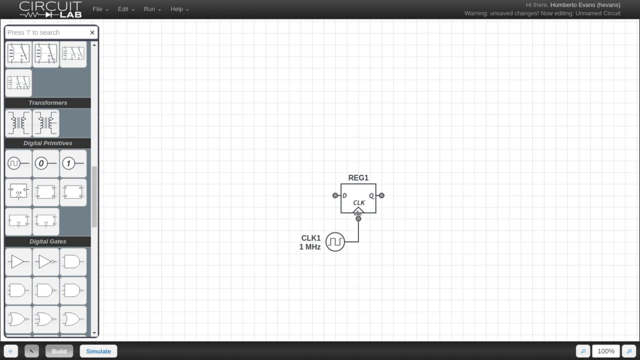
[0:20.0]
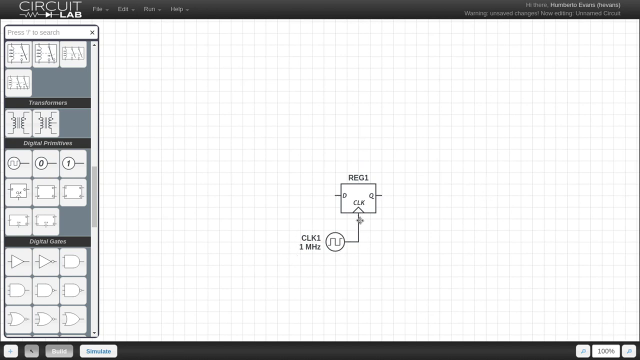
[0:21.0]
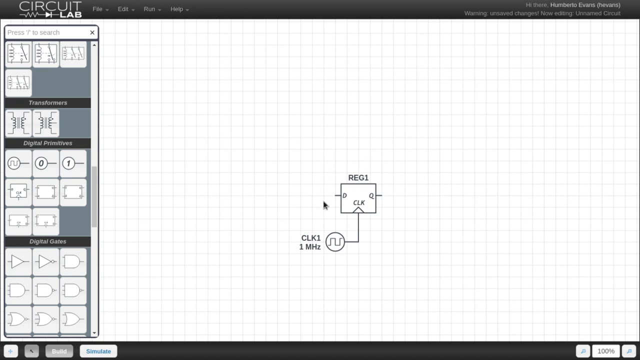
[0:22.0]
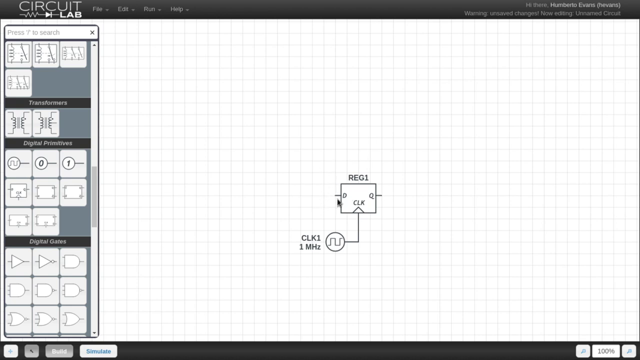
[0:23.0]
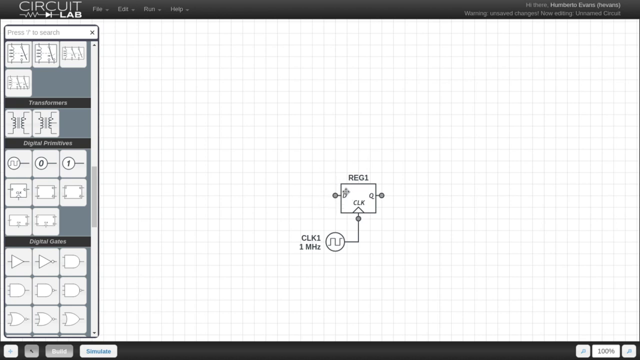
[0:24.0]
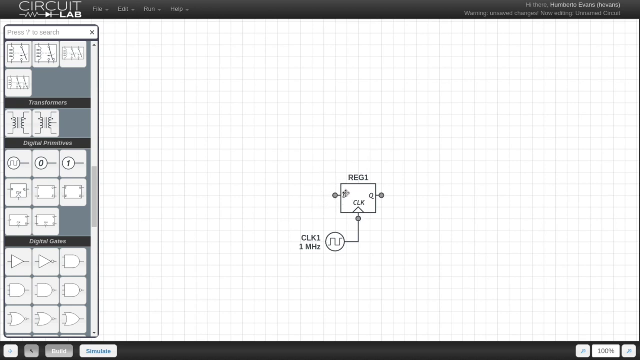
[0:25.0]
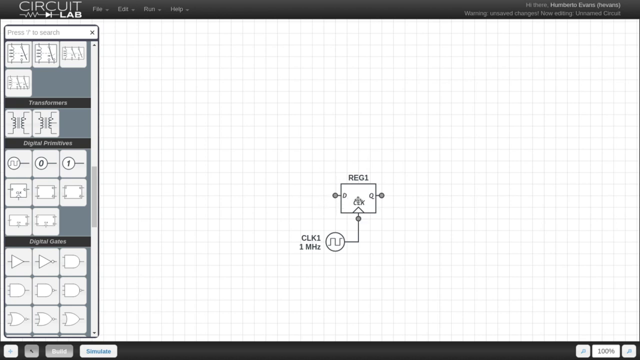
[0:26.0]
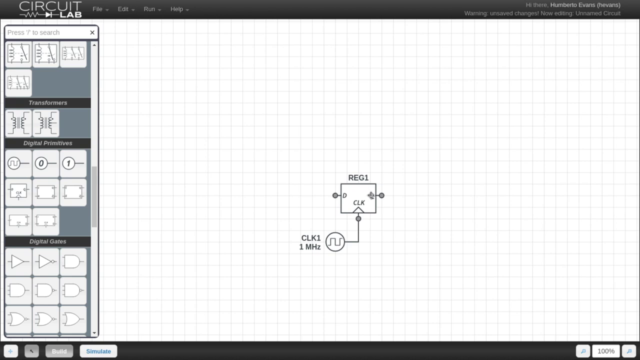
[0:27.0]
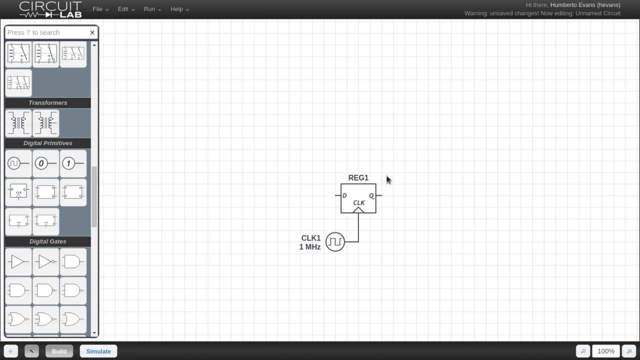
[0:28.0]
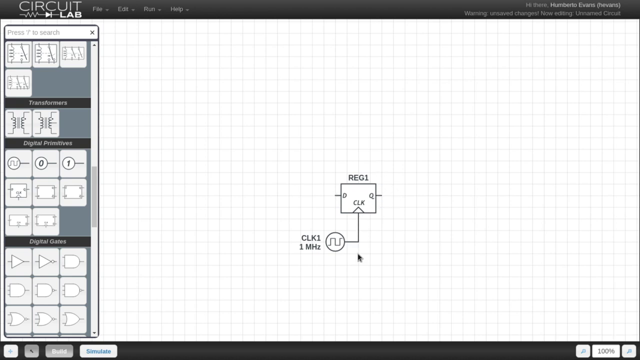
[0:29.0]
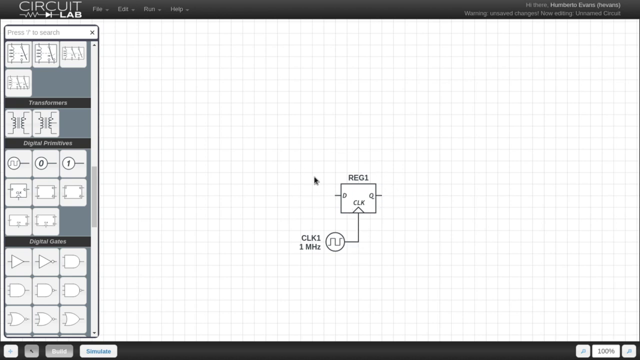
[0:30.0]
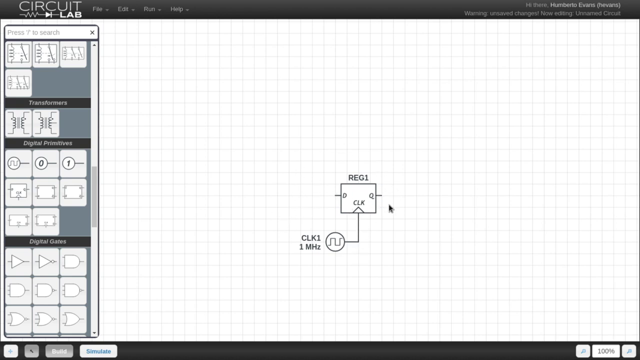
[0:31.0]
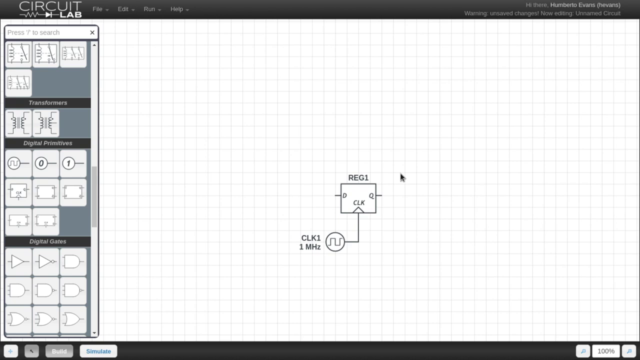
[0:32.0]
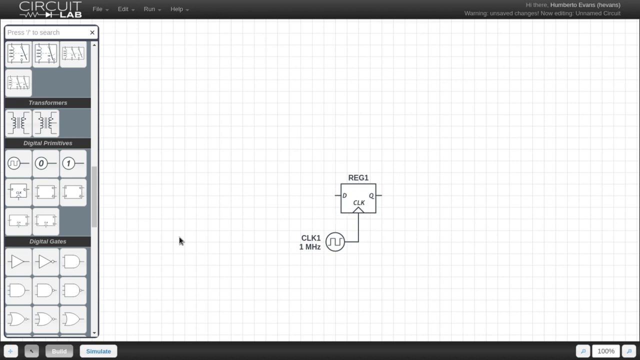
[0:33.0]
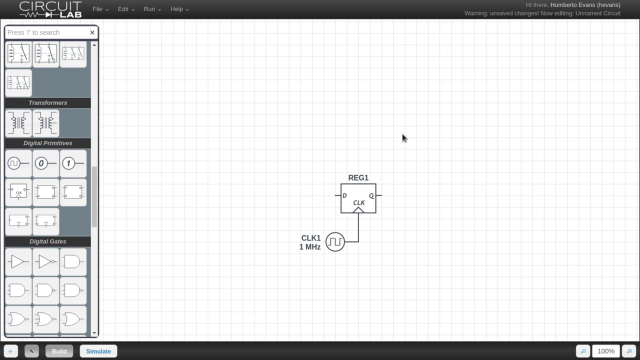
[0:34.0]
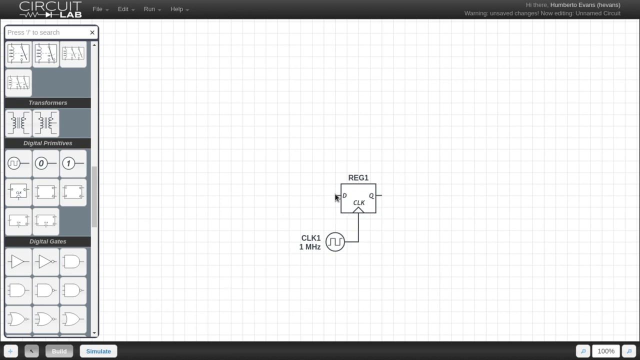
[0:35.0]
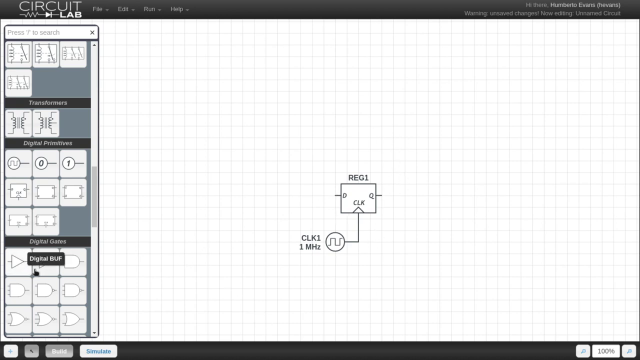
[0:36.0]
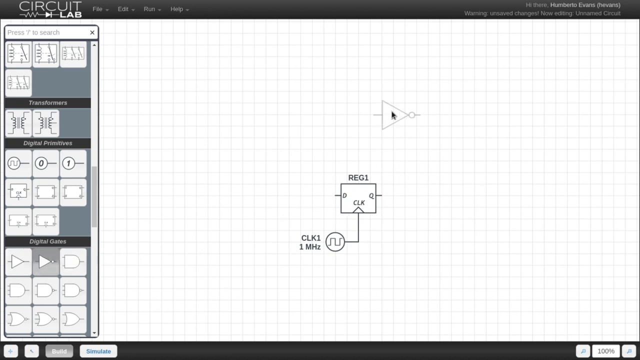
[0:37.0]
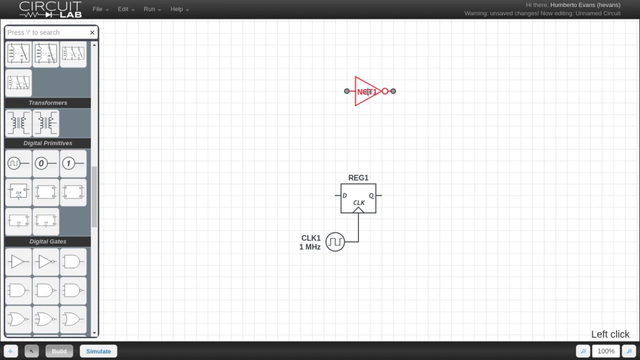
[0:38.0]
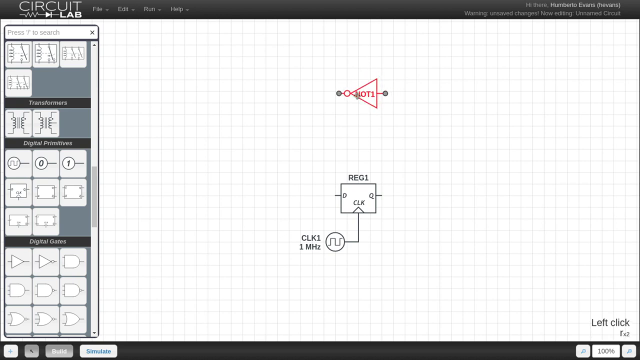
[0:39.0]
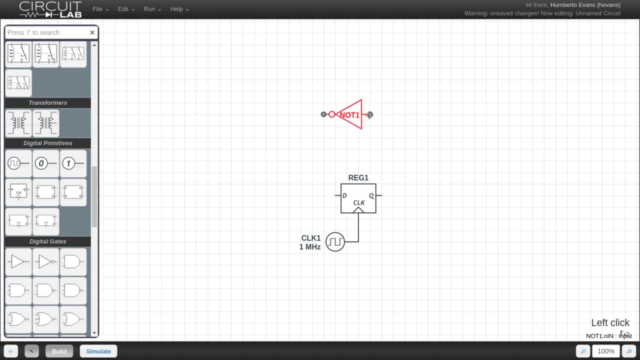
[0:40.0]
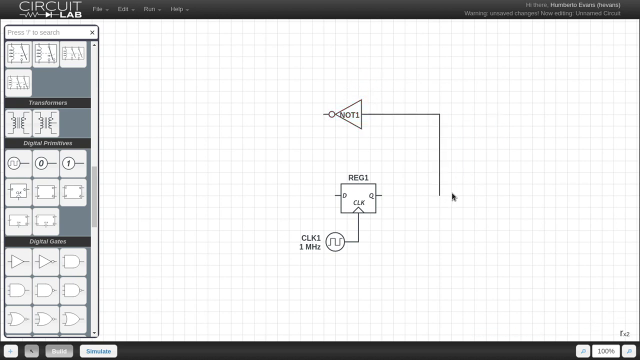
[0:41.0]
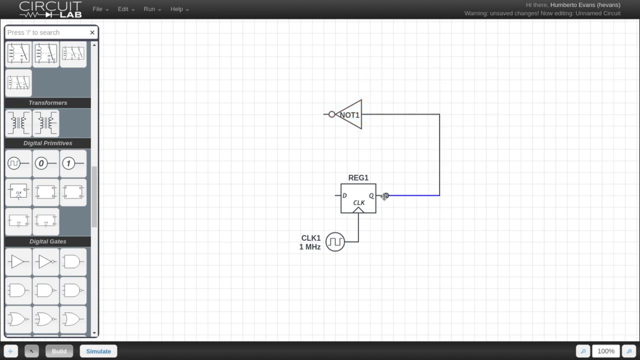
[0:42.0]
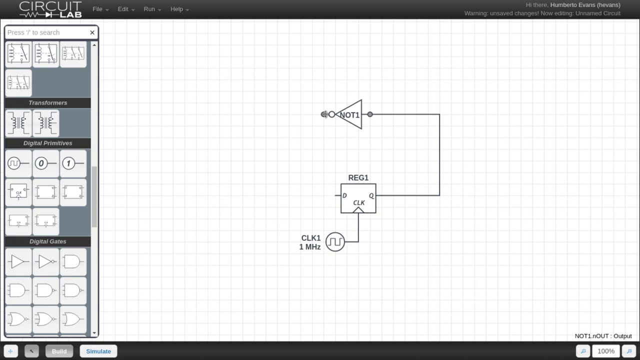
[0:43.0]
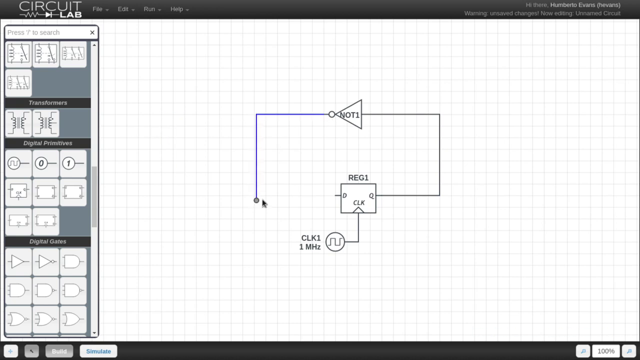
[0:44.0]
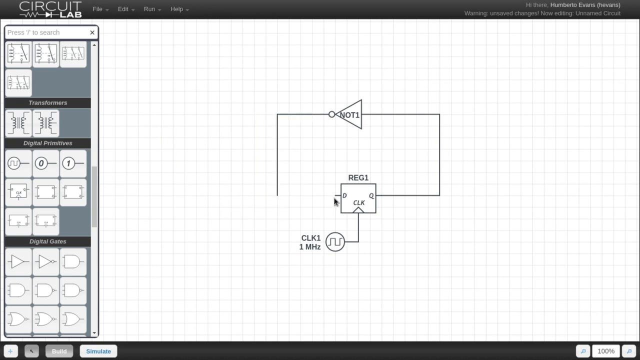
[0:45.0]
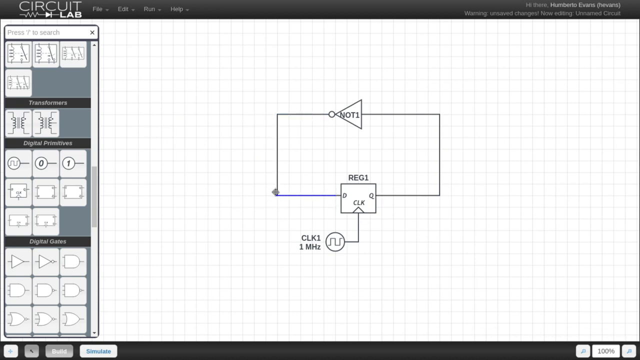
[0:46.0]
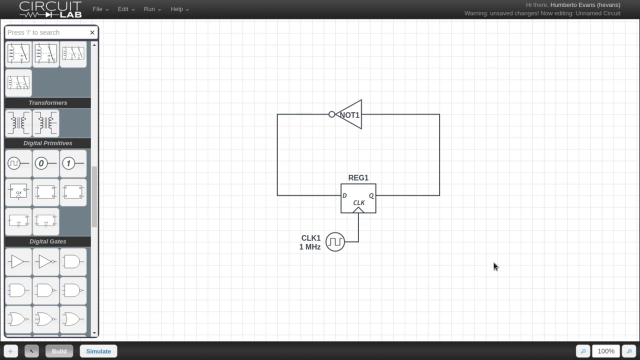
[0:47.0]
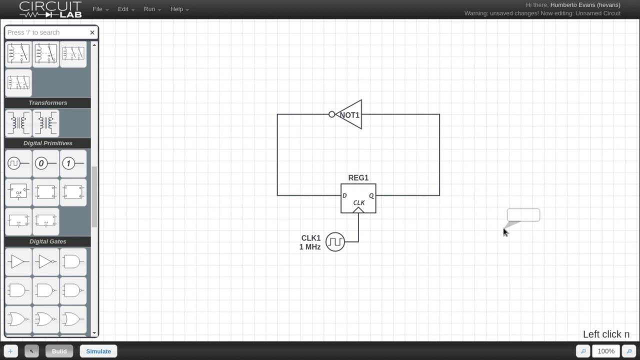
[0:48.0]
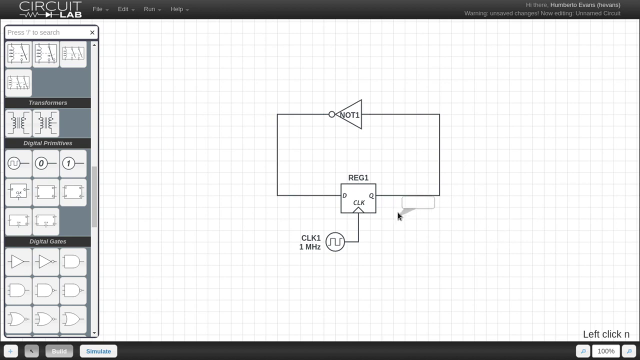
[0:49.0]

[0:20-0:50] The cursor moves through the program, apparently showing how to add new things, something like a digital grid, how to connect them, and how to make schemes. Information on how to add comments is also shown. It appears to be a screen recording of a program for creating circuits, possibly a demo or tutorial on building a scheme and using the program's tools.